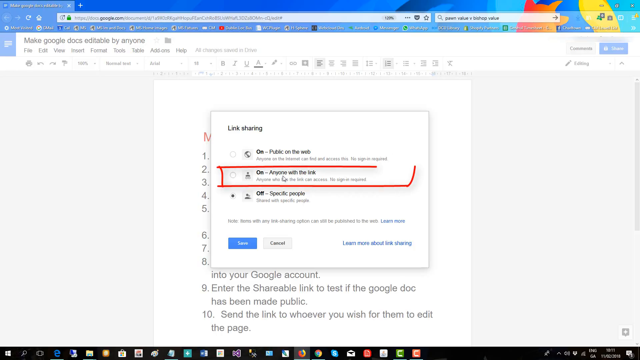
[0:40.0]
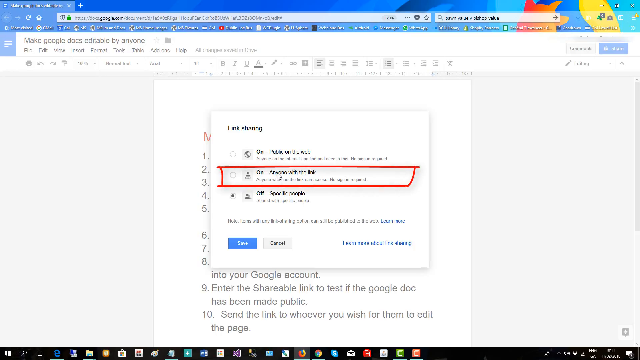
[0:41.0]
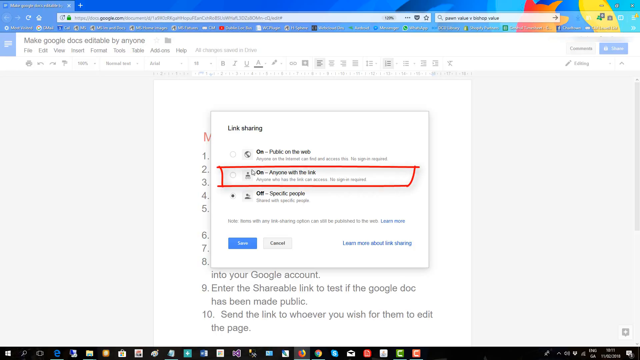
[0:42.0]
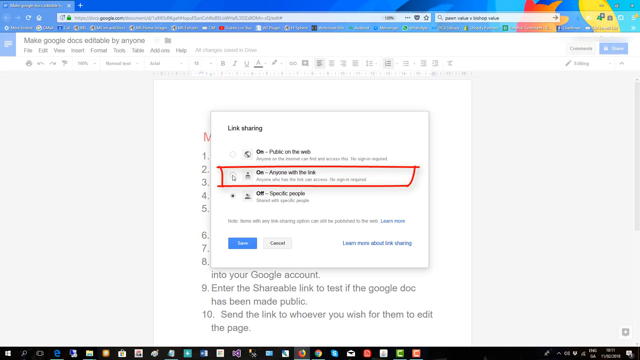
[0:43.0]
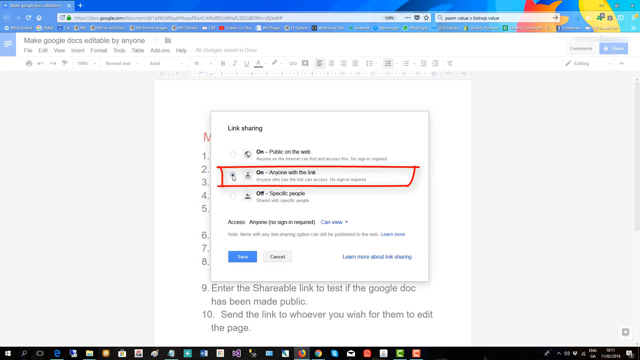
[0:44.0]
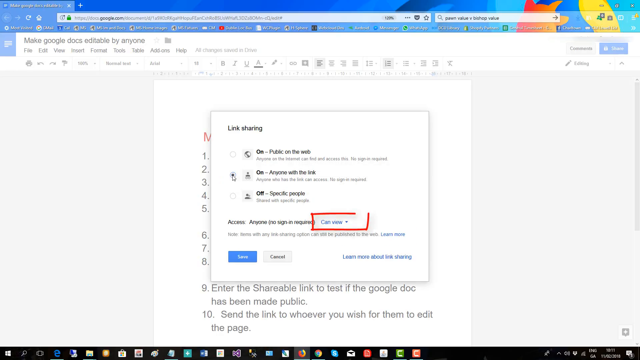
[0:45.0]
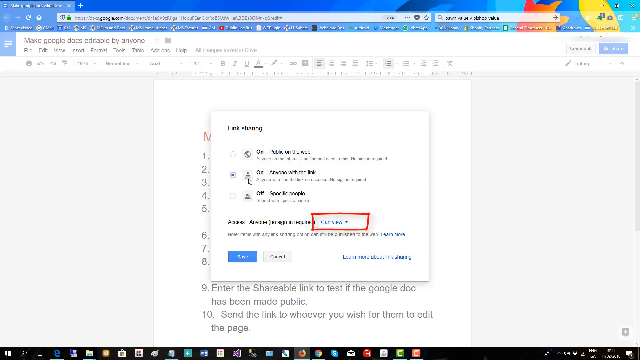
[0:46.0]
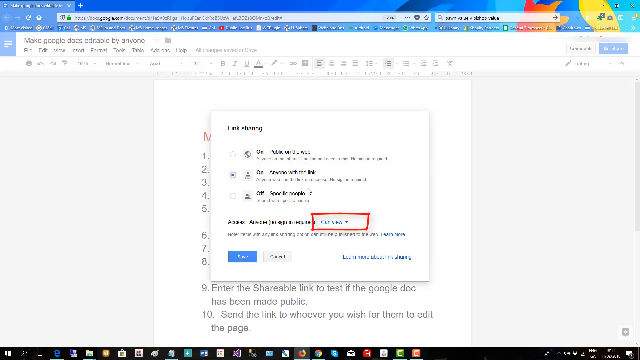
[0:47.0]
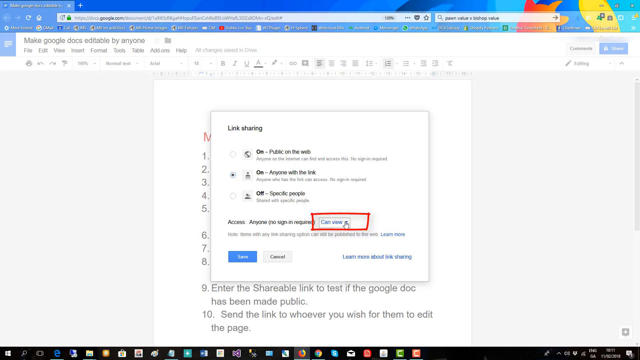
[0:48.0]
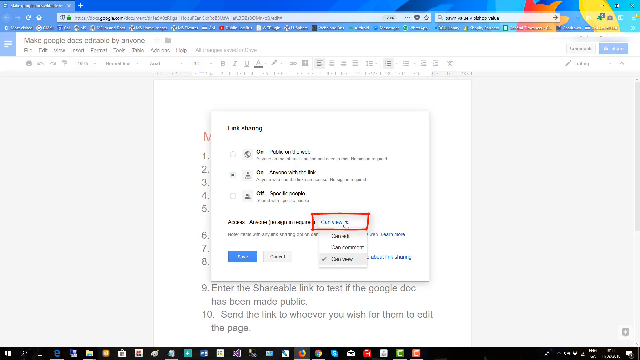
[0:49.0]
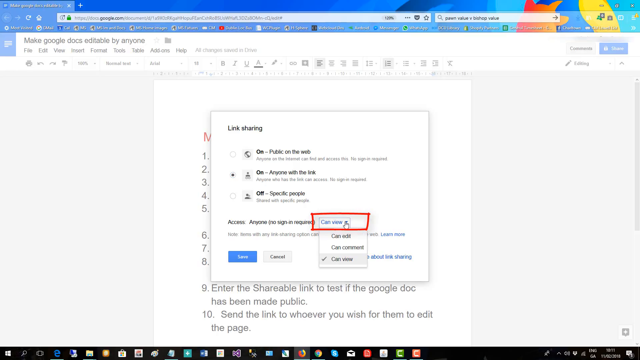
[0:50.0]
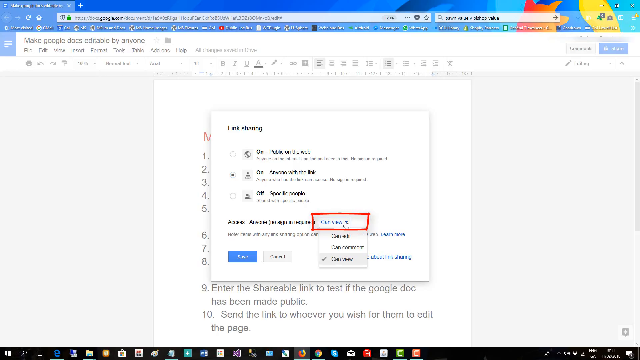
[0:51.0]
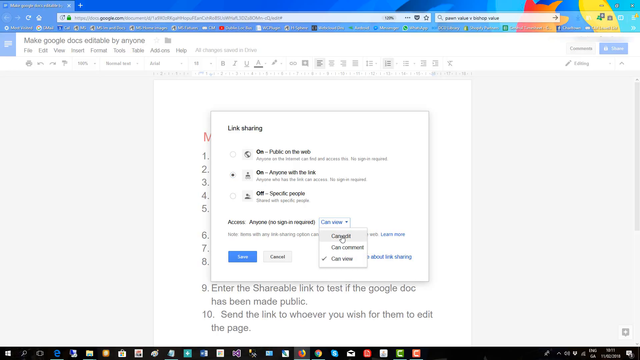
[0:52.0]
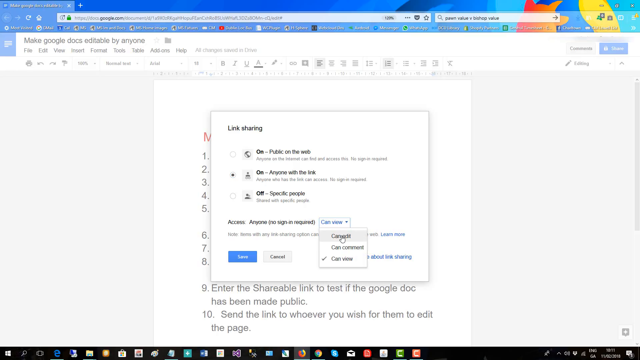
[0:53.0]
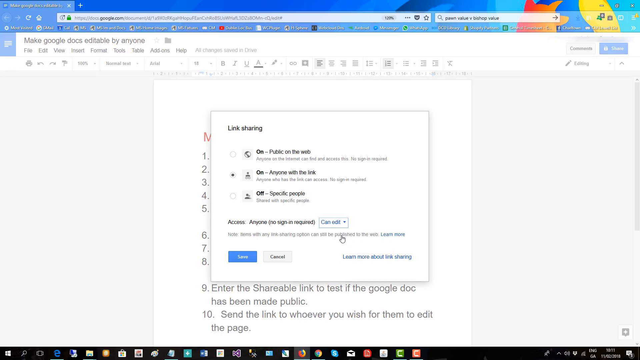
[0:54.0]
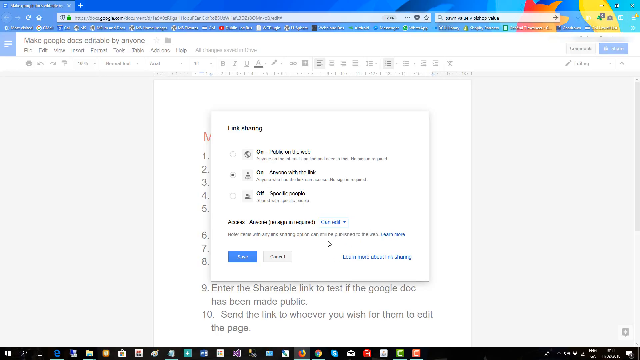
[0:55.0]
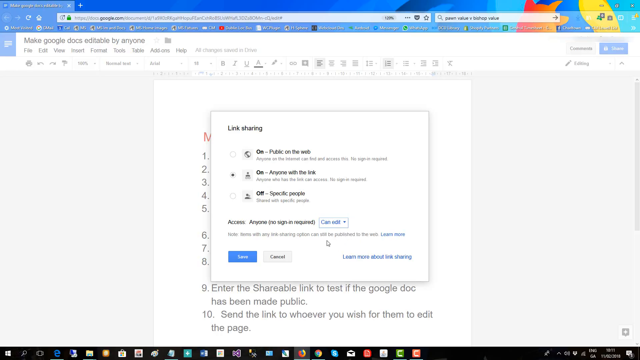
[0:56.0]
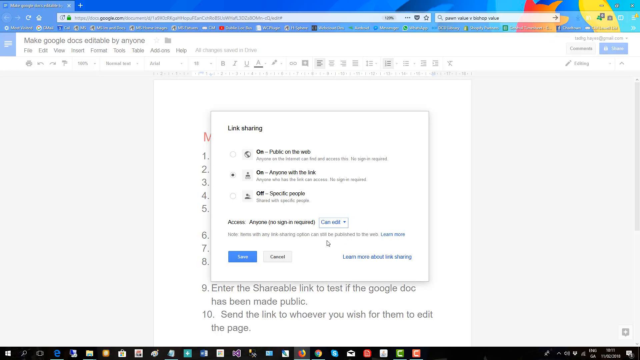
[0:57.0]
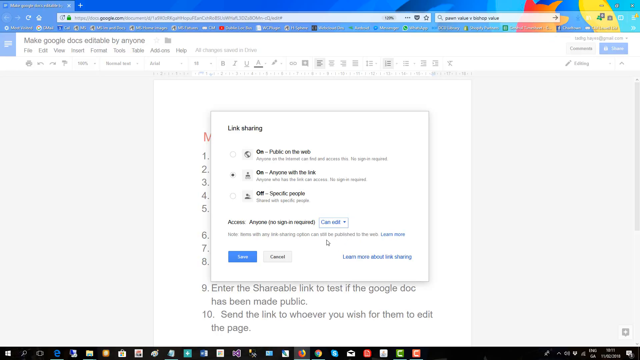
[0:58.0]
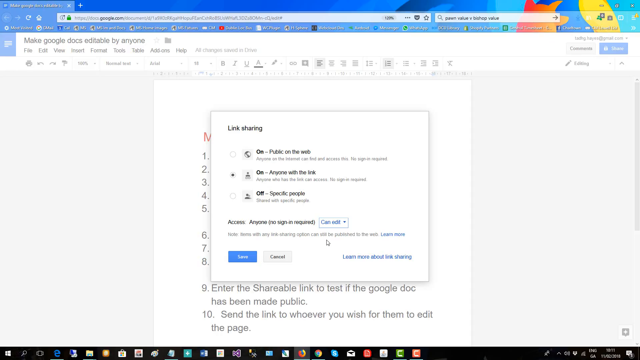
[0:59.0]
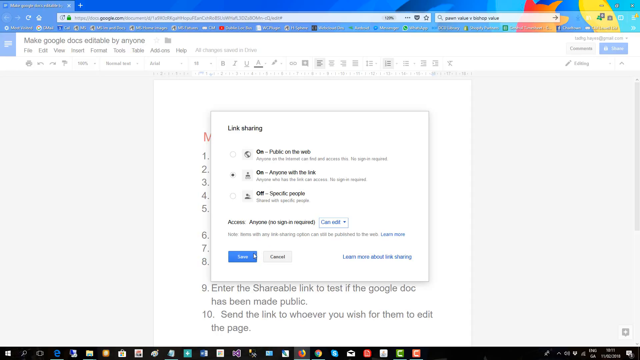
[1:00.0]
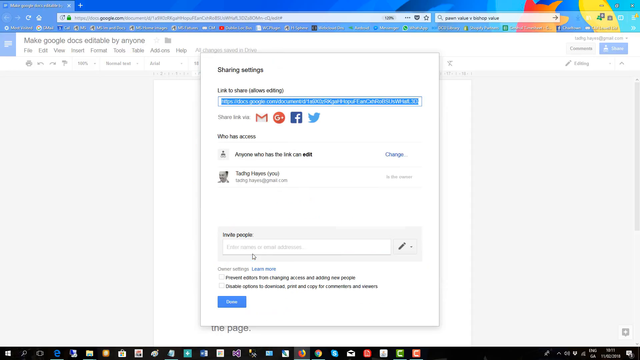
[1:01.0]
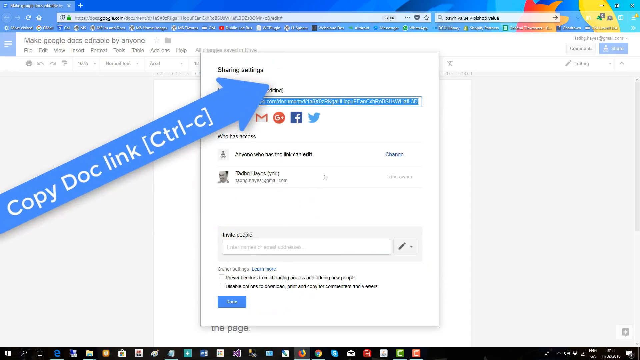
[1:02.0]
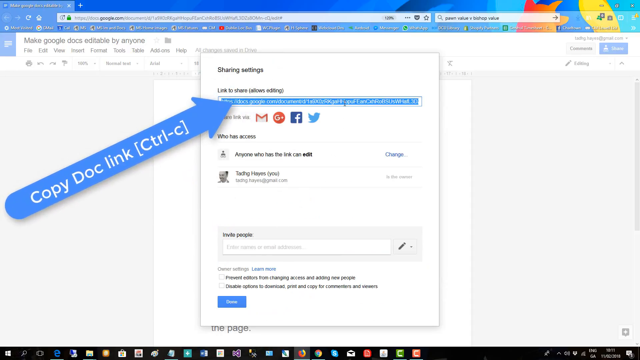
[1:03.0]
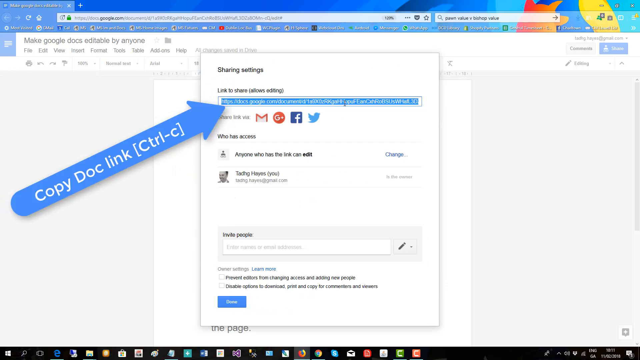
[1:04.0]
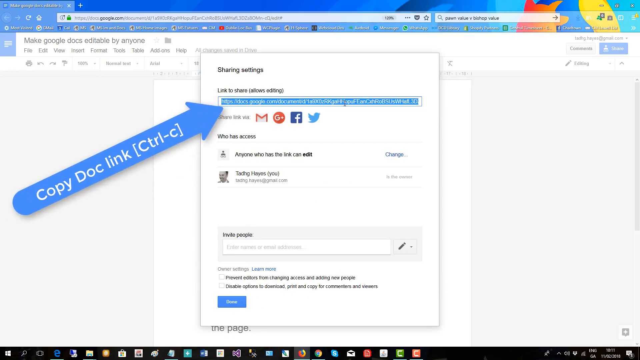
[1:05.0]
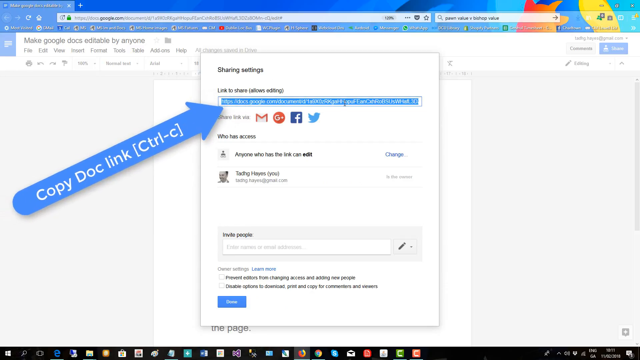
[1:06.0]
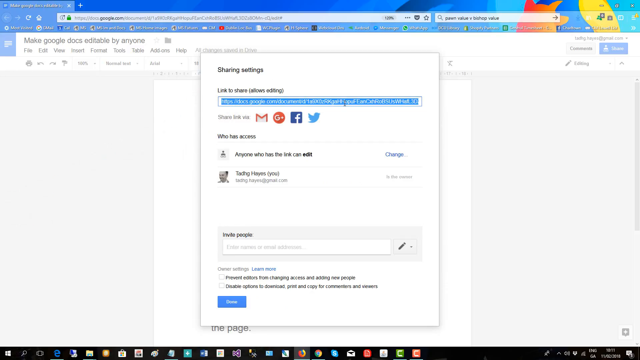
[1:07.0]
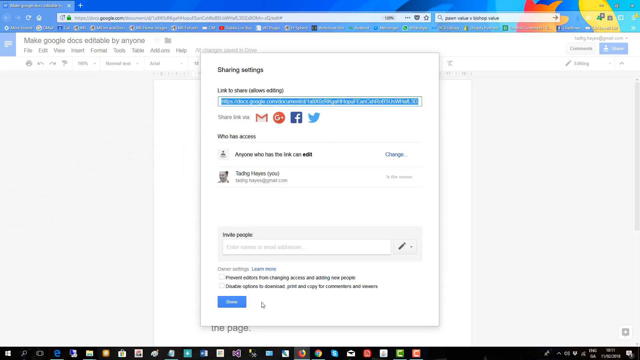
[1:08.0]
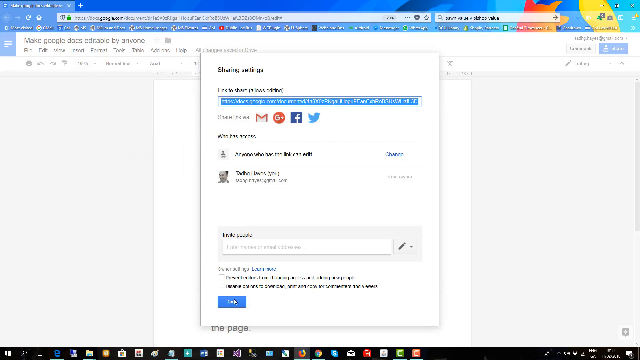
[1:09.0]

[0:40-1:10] A google.com page in the browser shows how to make Google Docs editable by anyone. A pop-up window over the tab reads "link sharing," with a red circle around the center selection, "anyone with a link." The mouse moves around and clicks "anyone with a link," where the "can view" setting is changed to "can edit." The pointer then goes down to the bottom and clicks the save button. After that, a "copy docs link" arrow pops up indicating that the link at the top should be copied before clicking done in that separate window.